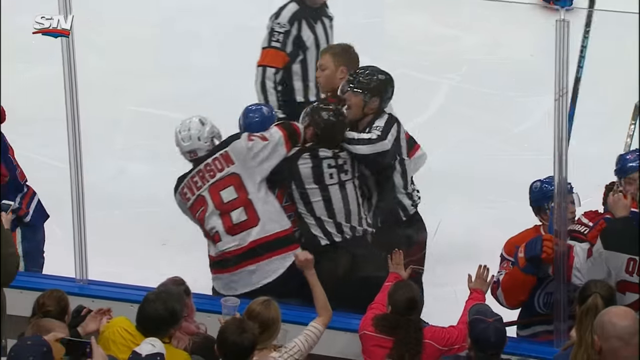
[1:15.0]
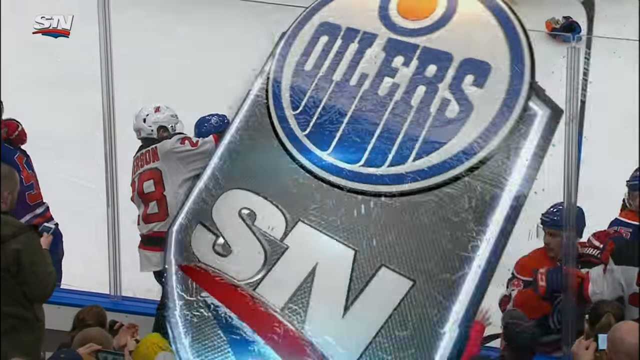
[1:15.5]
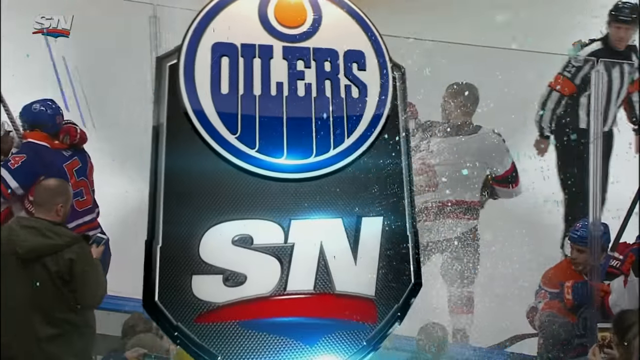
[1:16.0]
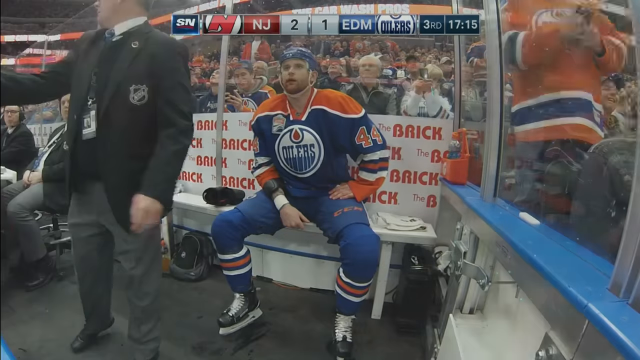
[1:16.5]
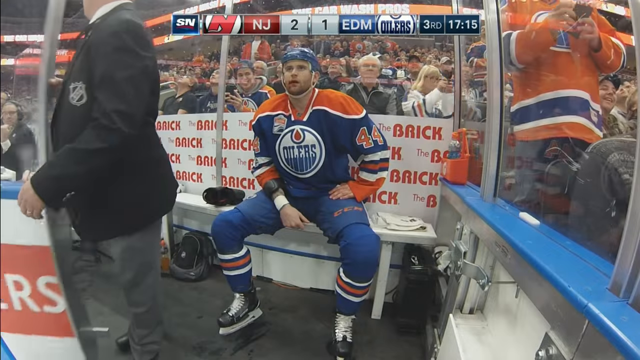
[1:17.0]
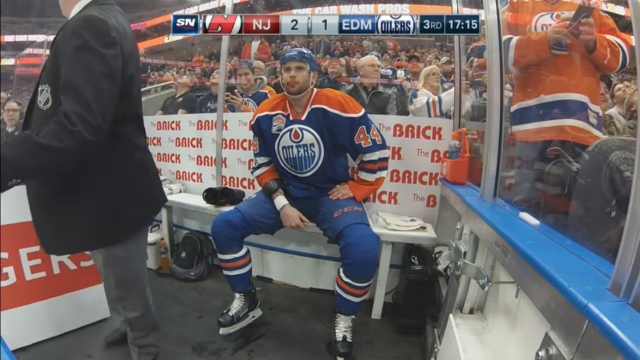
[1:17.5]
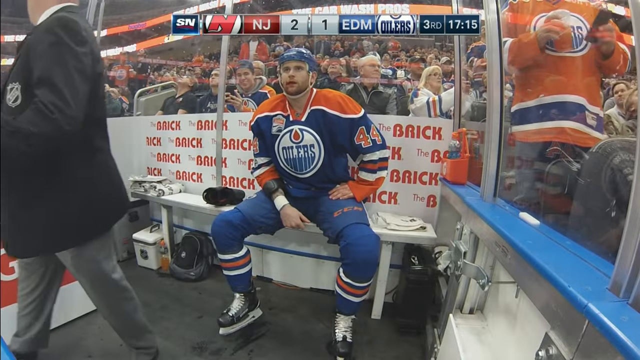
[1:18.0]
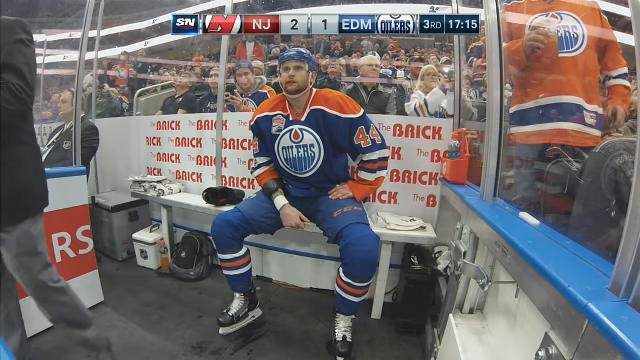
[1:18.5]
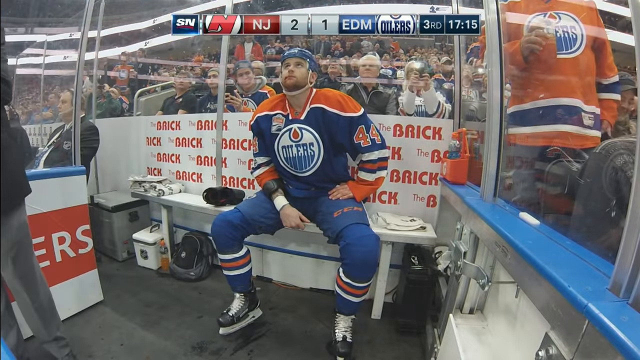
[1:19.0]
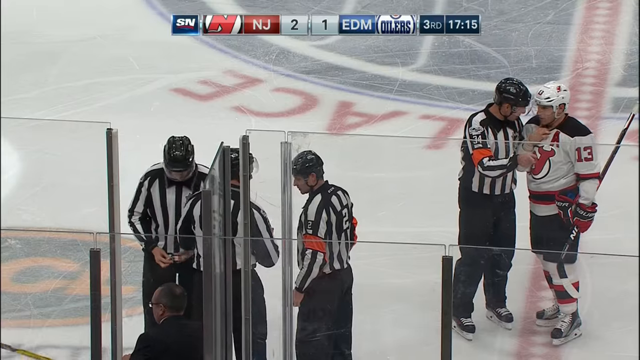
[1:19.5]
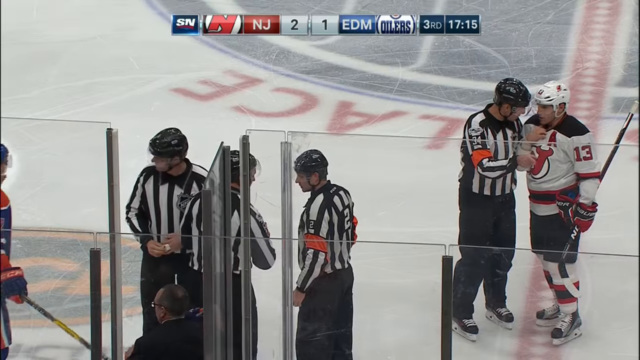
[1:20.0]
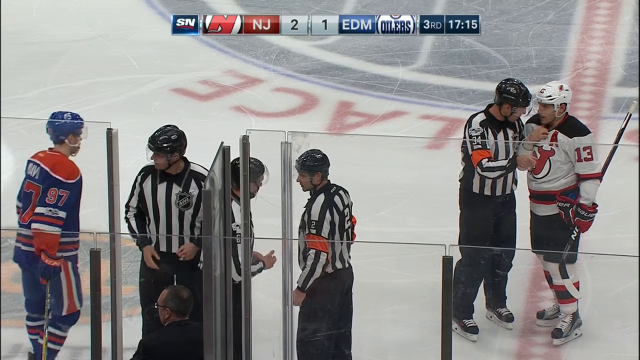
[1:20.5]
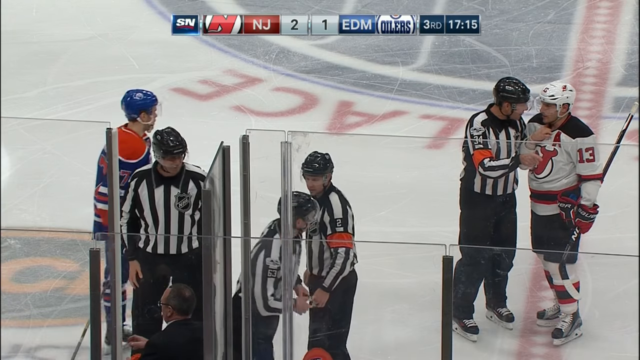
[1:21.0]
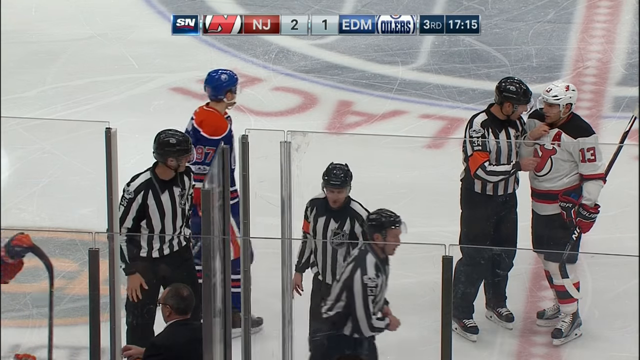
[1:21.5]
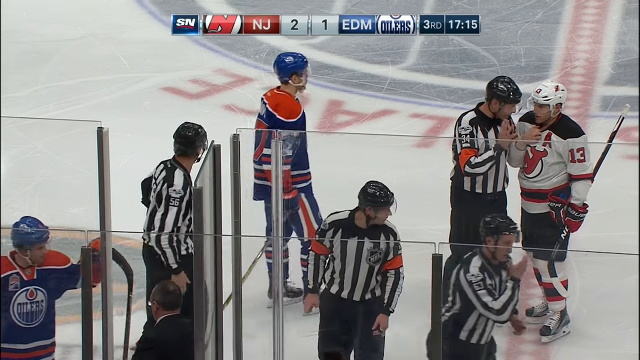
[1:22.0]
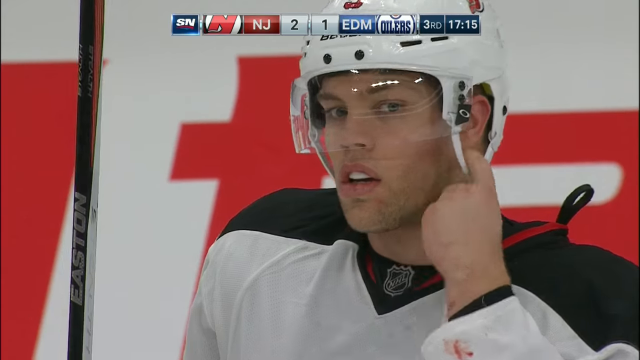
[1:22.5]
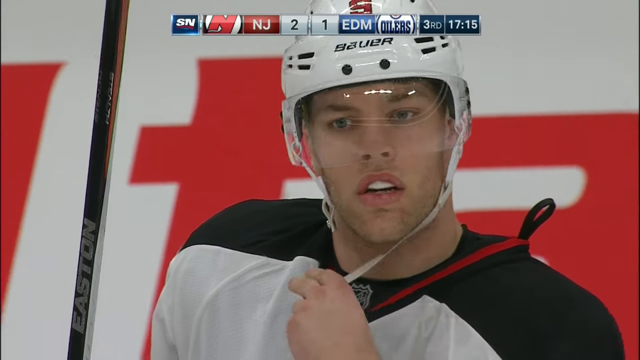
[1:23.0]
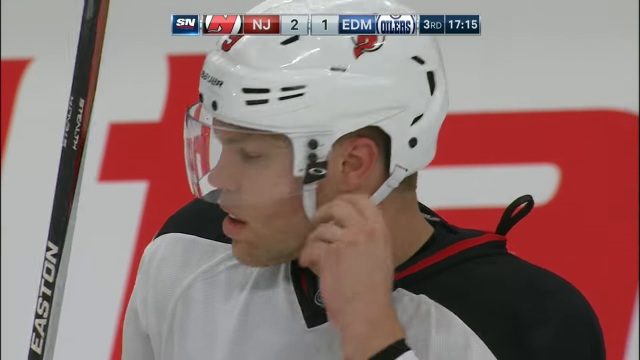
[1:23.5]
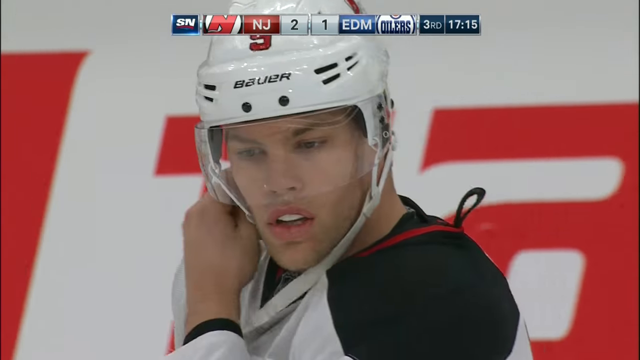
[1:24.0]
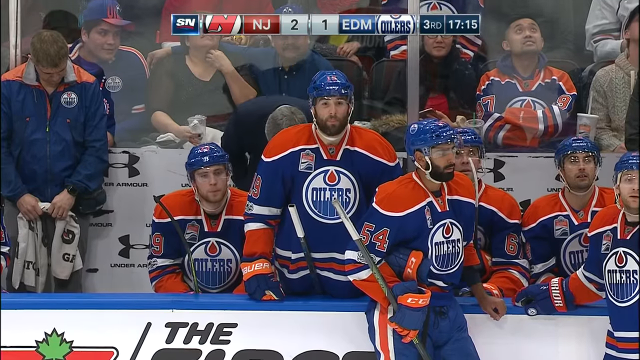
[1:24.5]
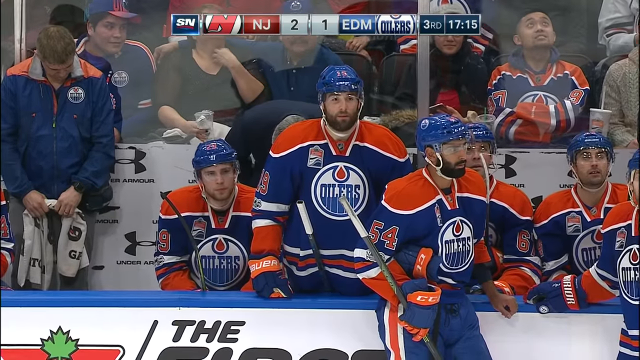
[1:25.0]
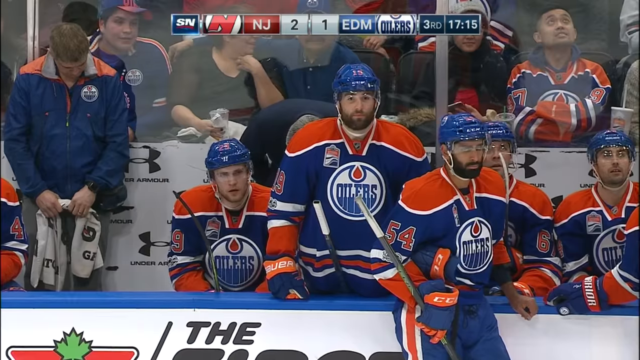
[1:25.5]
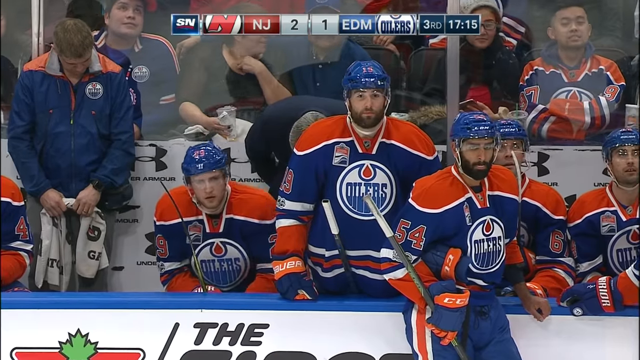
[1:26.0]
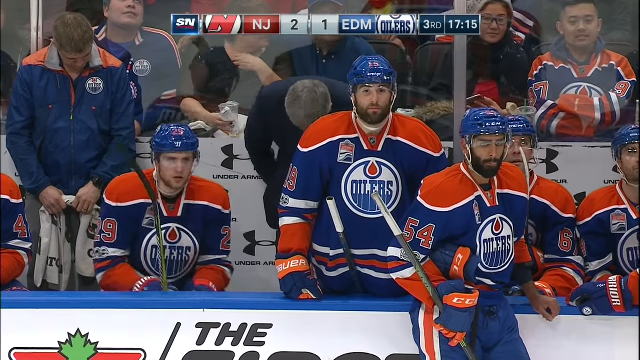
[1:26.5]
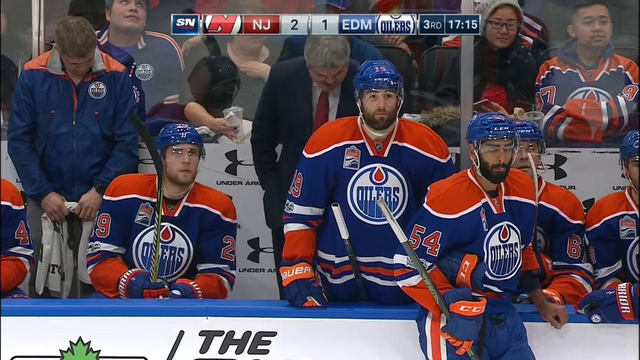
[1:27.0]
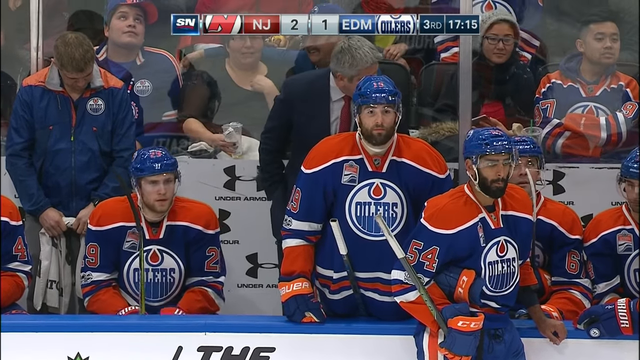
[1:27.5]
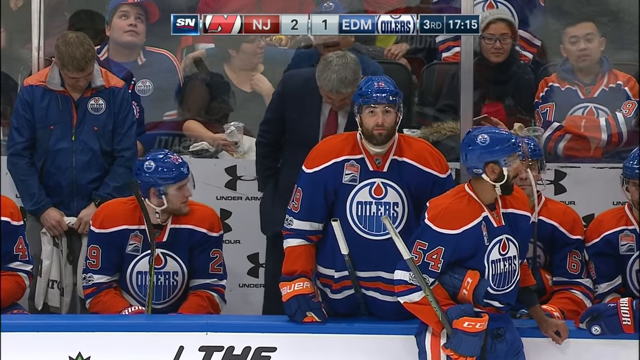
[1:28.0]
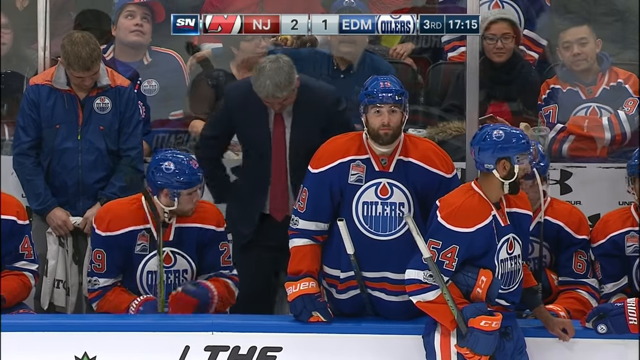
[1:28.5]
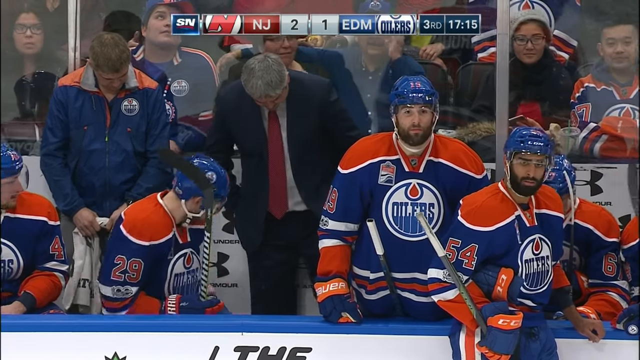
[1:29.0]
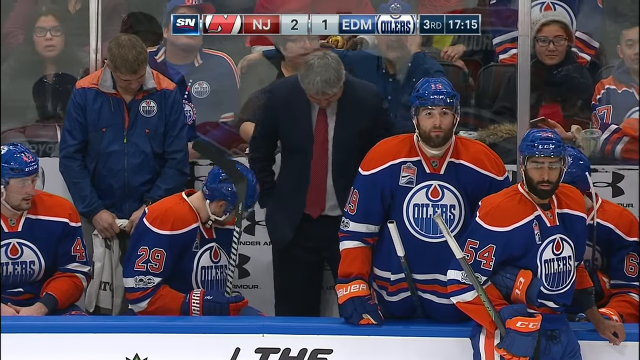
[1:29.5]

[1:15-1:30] A shot shows Cassian on the bench, sitting alone. He had been dropped at center ice by a Devils player, the first blow. The referees are at center ice trying to control the game. The Oilers jerseys are blue and orange.